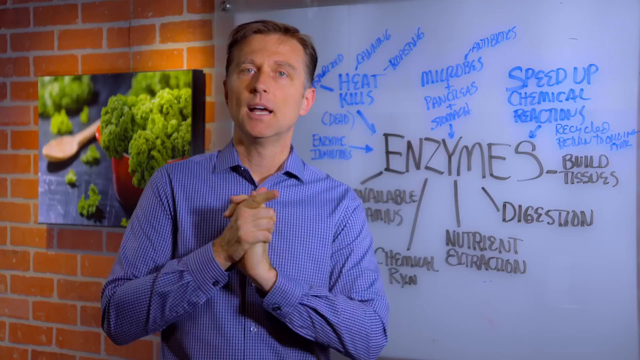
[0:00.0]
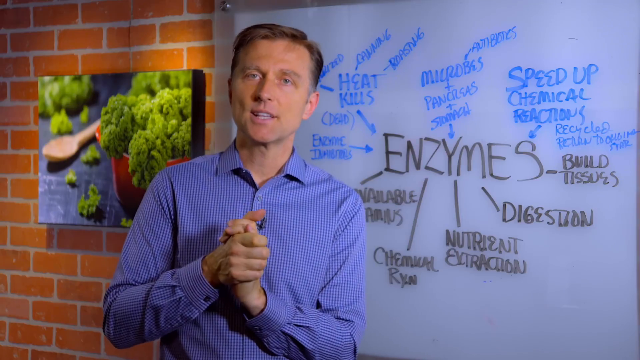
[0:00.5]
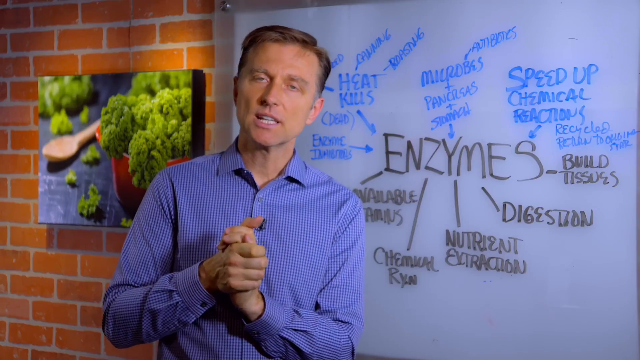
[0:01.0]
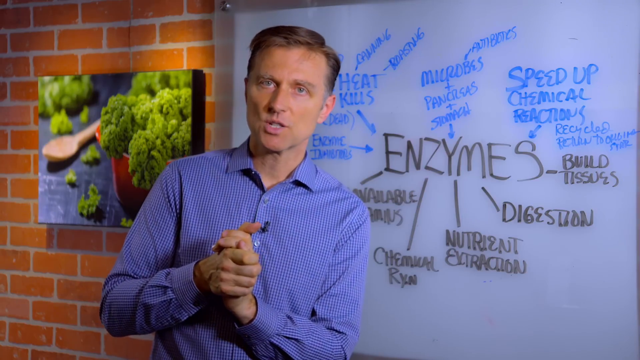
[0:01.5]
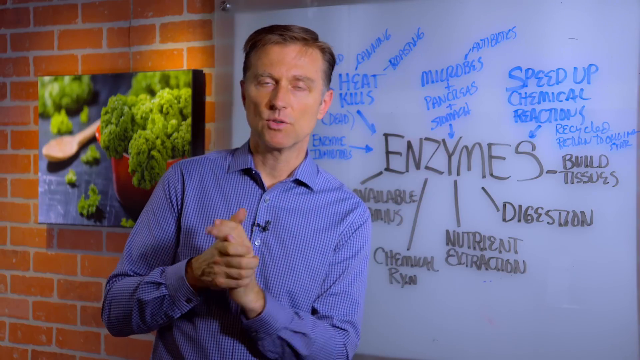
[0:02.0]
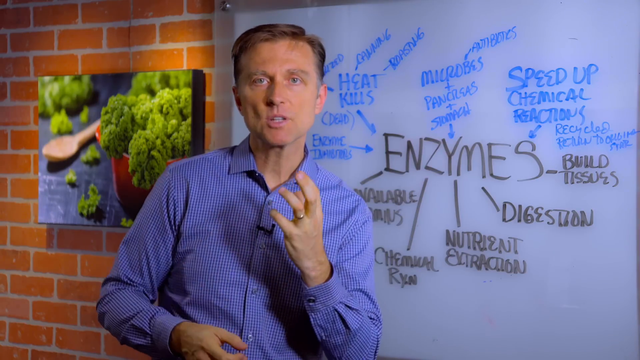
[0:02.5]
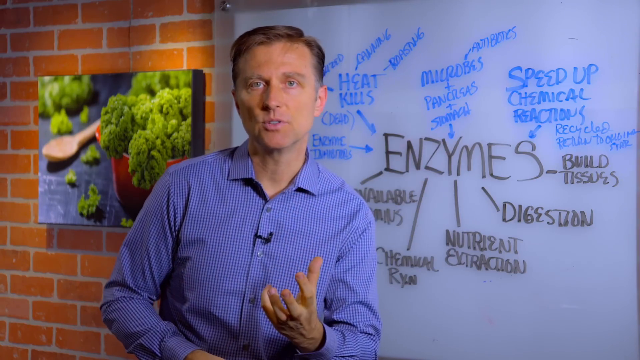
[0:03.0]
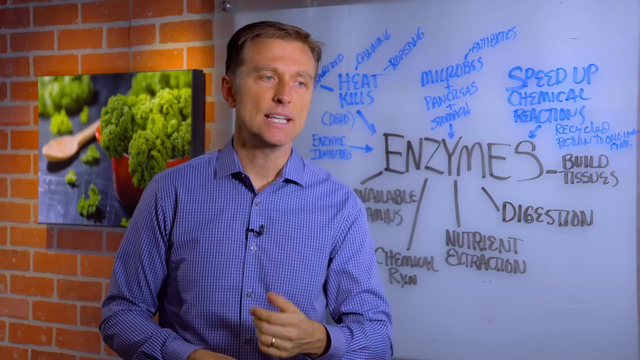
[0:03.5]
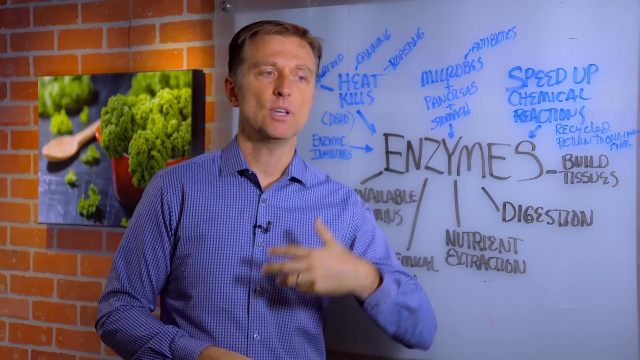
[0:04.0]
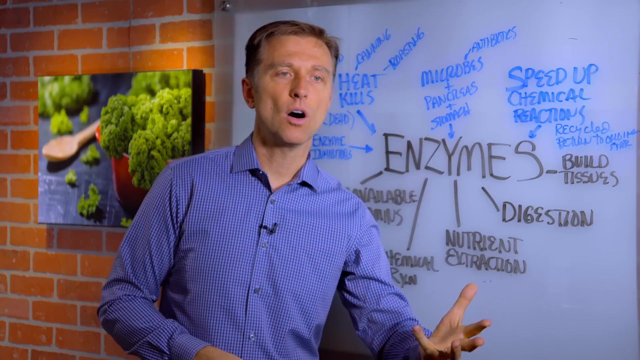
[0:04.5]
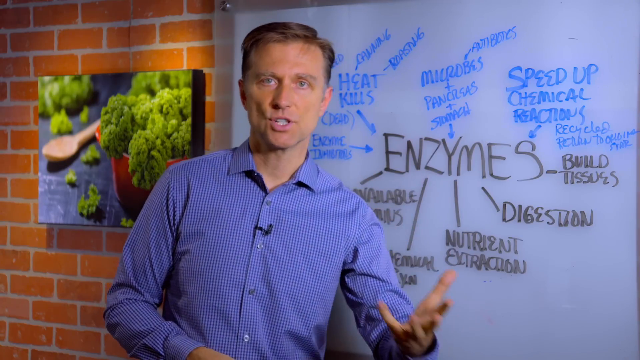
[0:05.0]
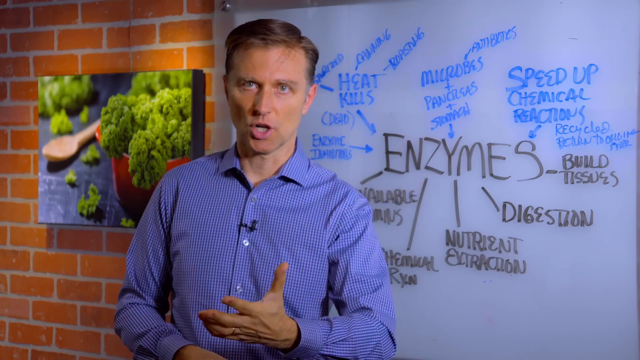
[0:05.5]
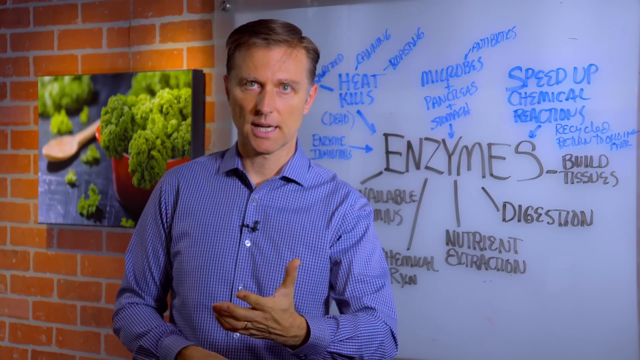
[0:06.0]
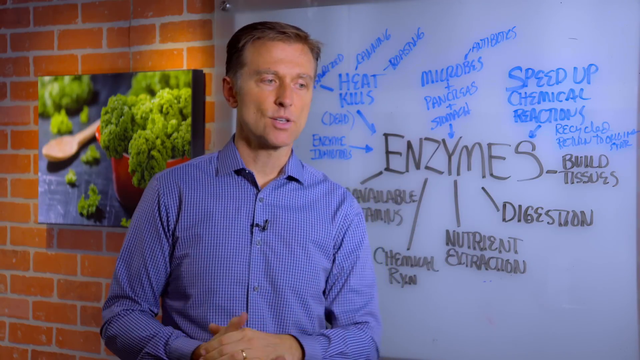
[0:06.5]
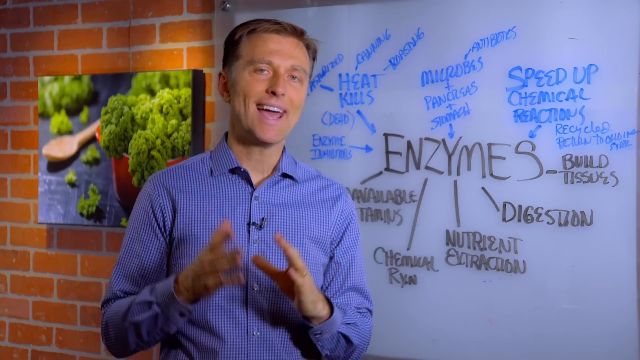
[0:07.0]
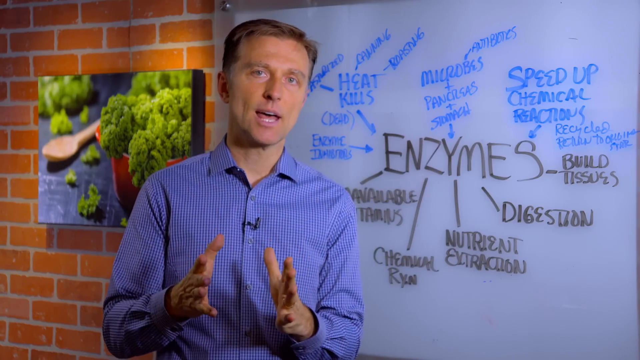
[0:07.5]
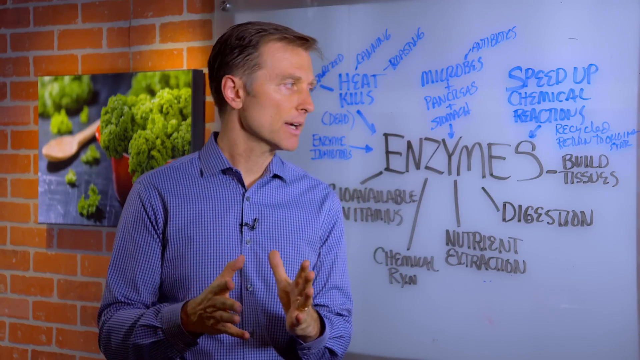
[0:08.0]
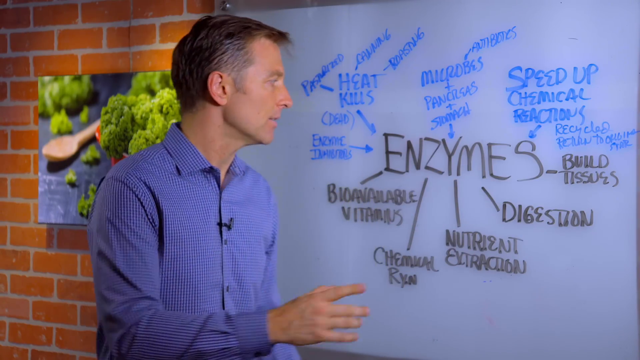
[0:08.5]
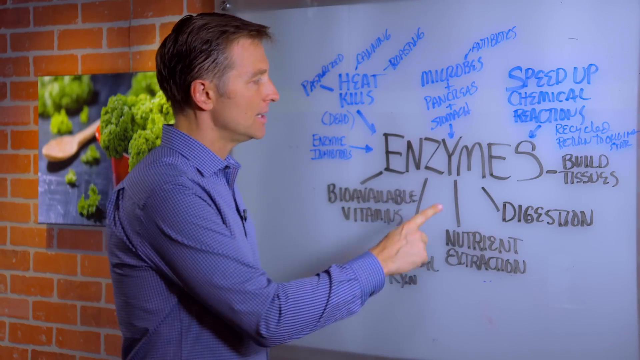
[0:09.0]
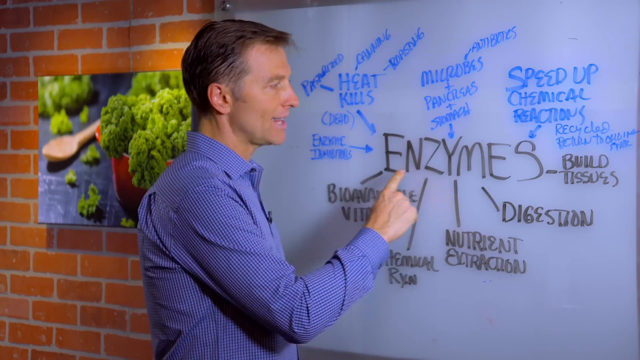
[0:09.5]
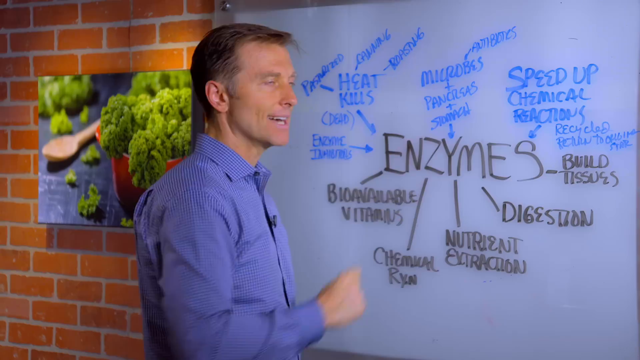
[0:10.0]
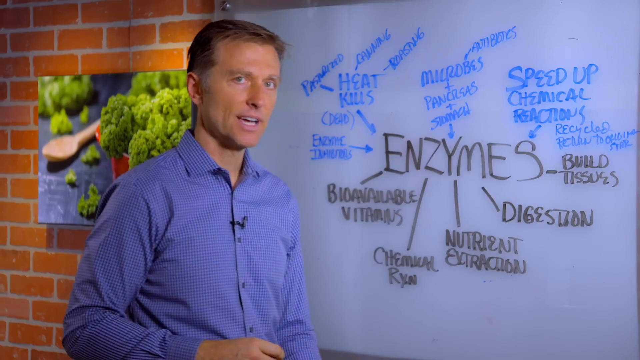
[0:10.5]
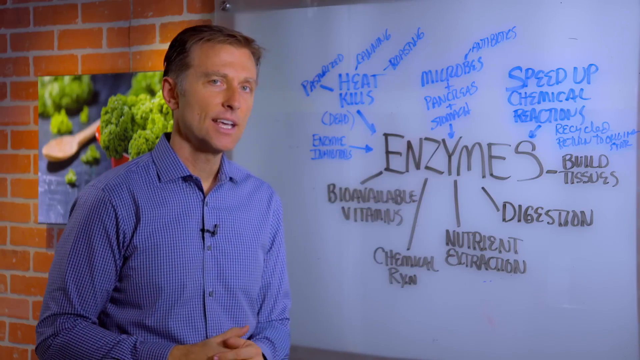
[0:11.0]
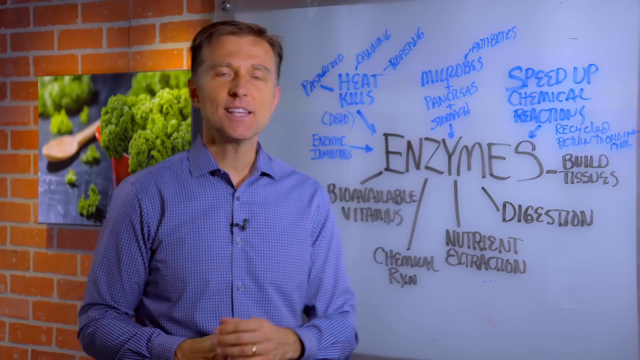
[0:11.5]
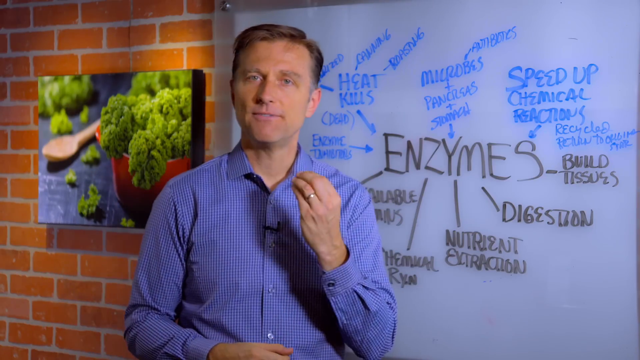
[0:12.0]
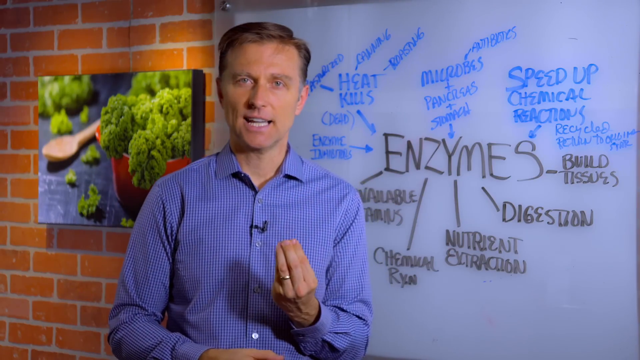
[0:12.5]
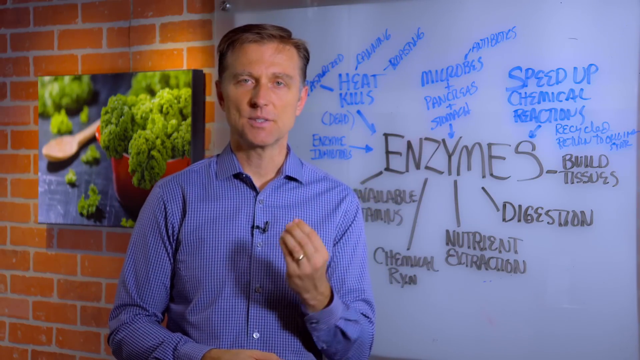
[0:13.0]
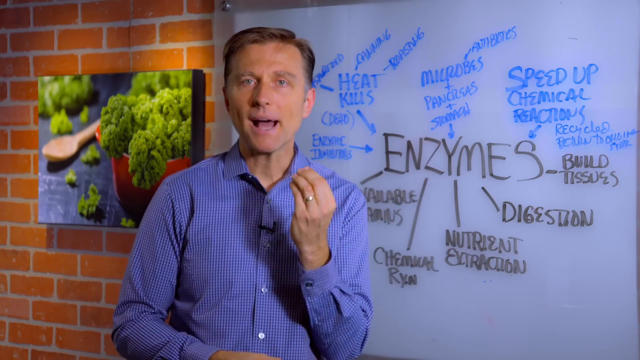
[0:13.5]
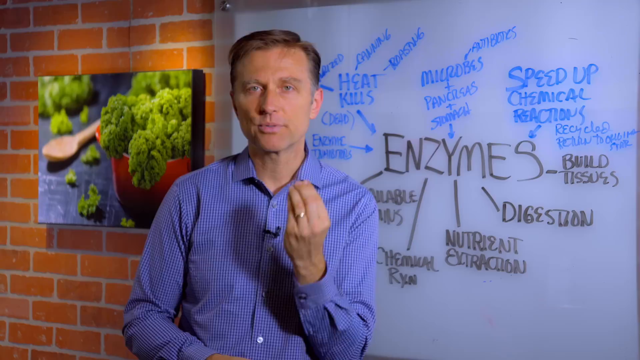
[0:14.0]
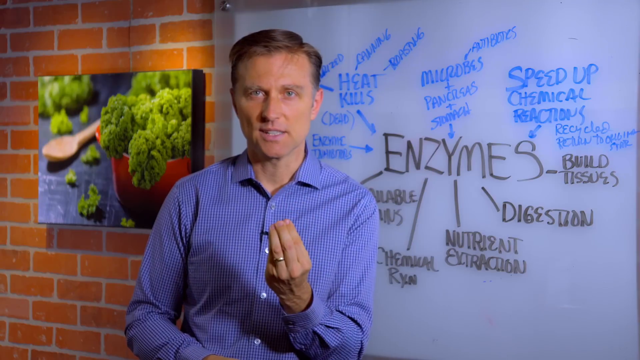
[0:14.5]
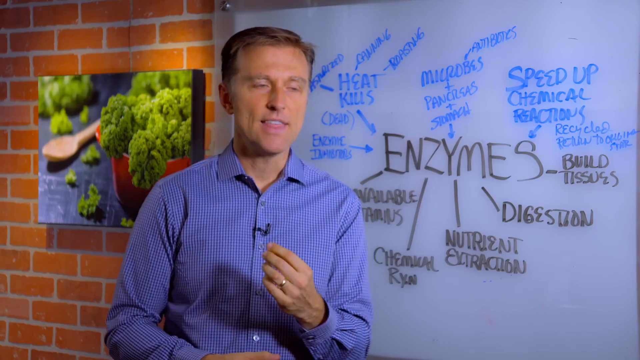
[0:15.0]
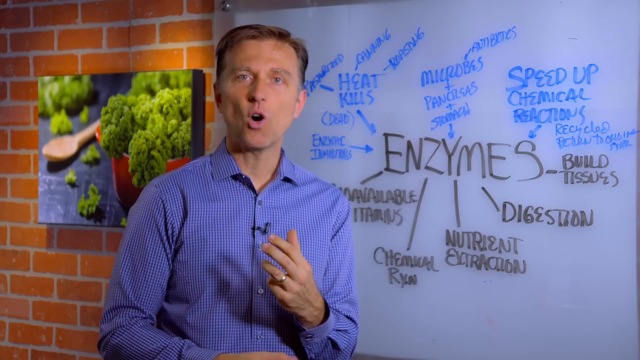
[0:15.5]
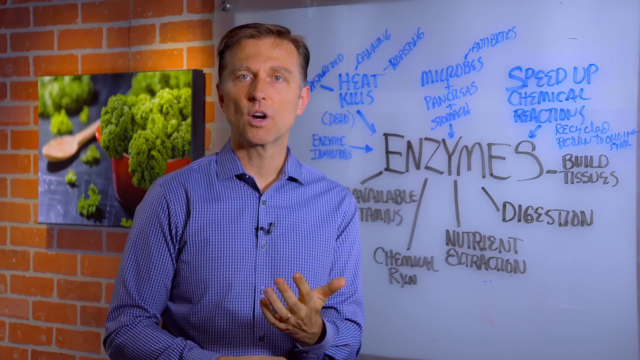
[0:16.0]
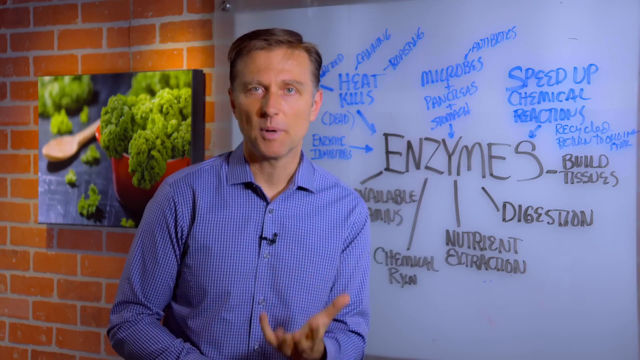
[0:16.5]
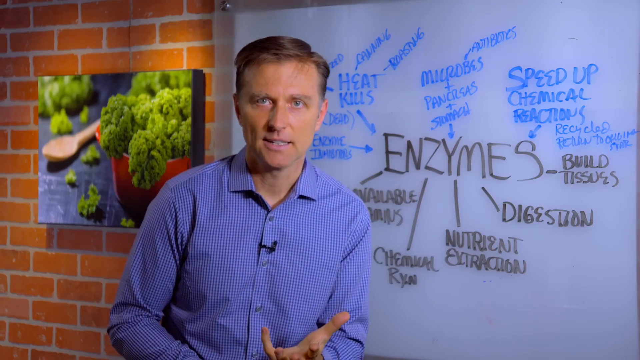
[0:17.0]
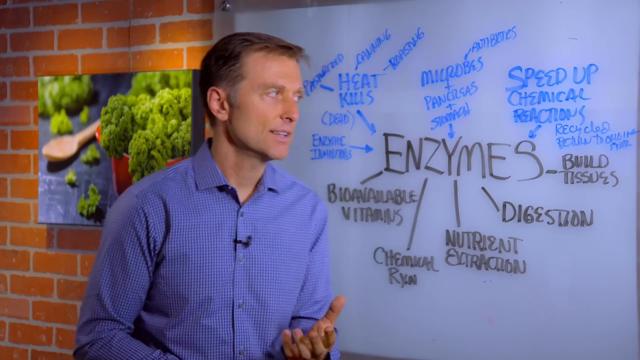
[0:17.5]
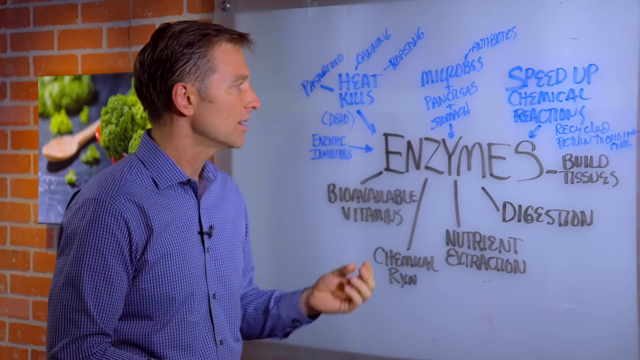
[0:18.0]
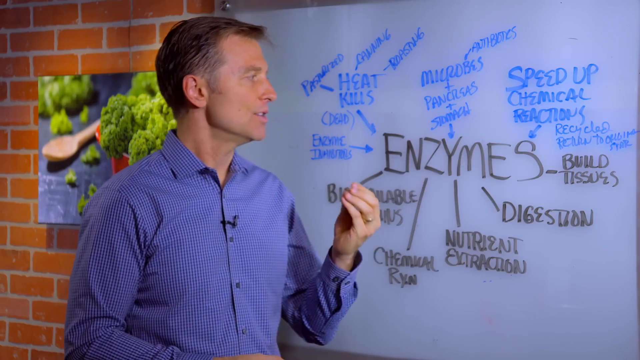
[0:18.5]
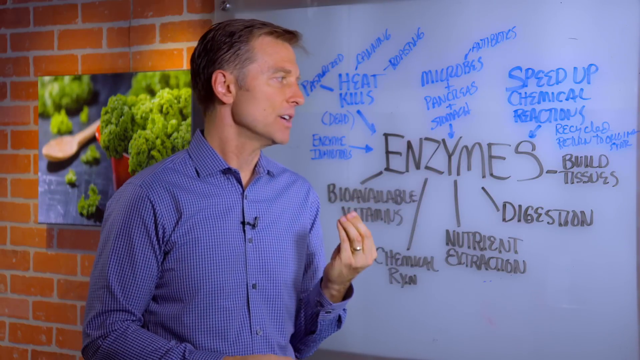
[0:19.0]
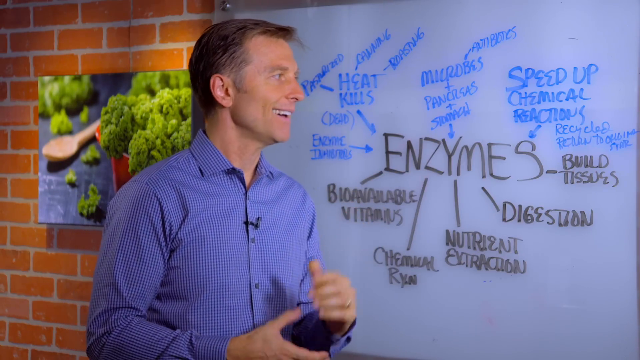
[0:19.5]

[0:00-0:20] A man of about 40, maybe 50, with brown hair wears a white and blue shirt covered in squares. He is in front of what seems to be a drawing board, and on the brick wall there is a picture of what seems to be broccoli. He starts talking and refers to what is on the board, making a point about enzymes. He moves his hand as if pointing things out, repeatedly shakes it with his fingertips touching together, moving it up and down, and then grabs that hand with his other one.